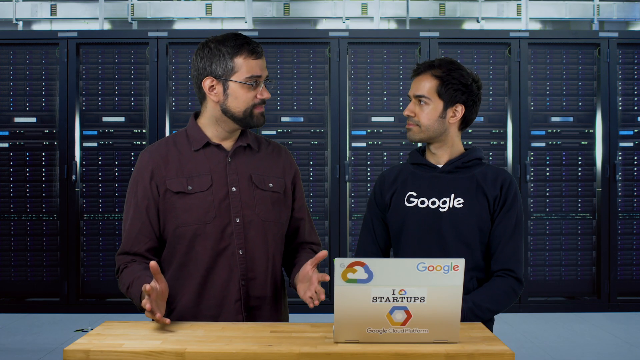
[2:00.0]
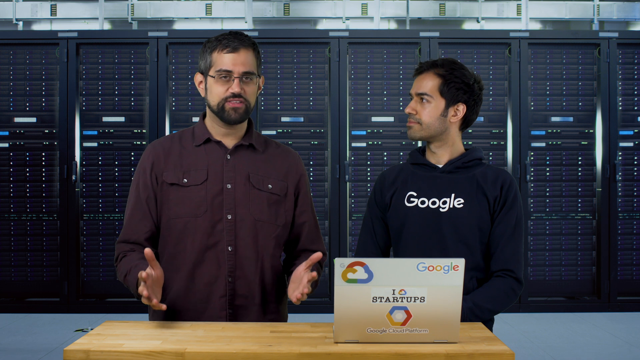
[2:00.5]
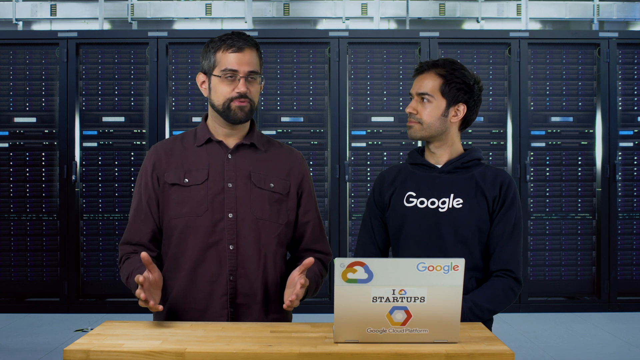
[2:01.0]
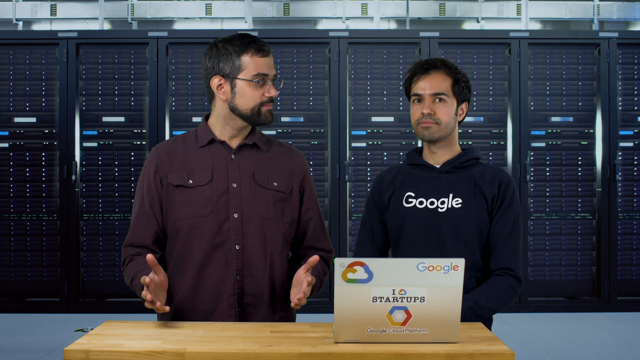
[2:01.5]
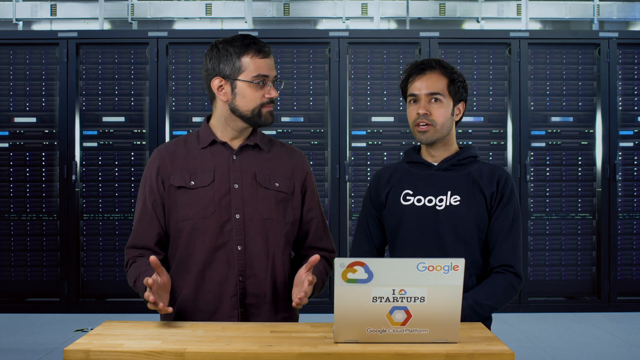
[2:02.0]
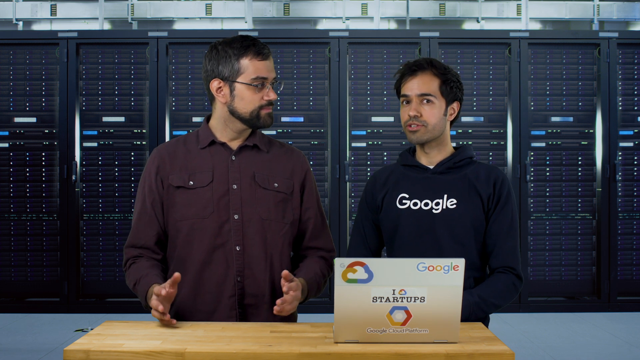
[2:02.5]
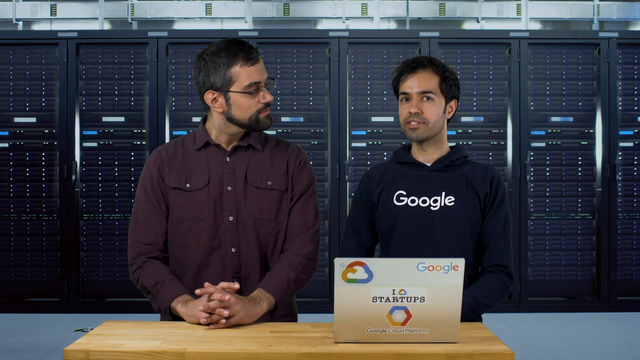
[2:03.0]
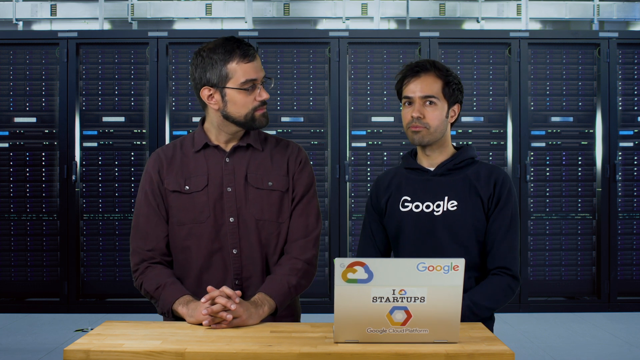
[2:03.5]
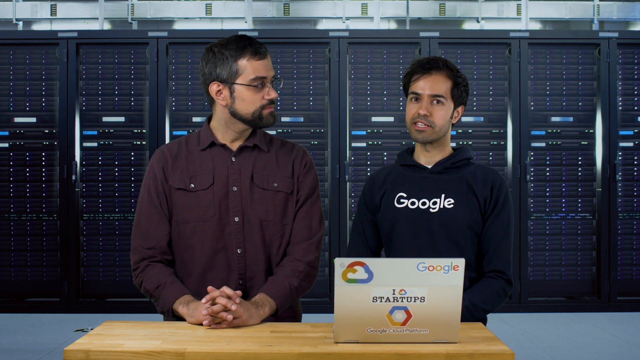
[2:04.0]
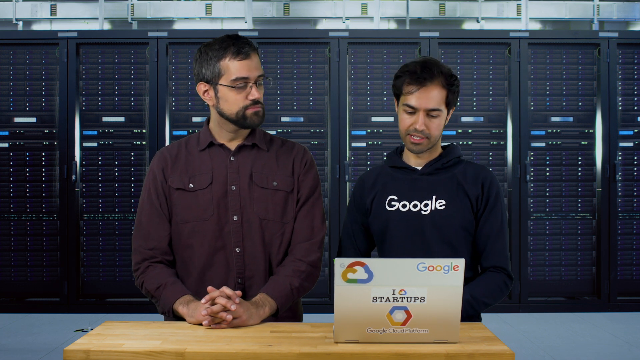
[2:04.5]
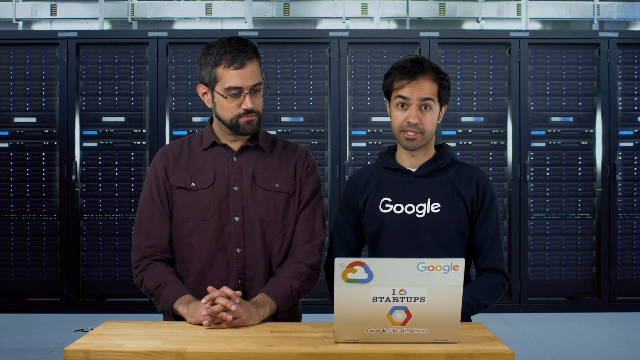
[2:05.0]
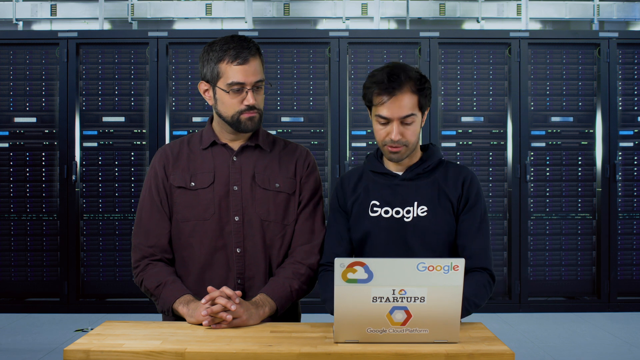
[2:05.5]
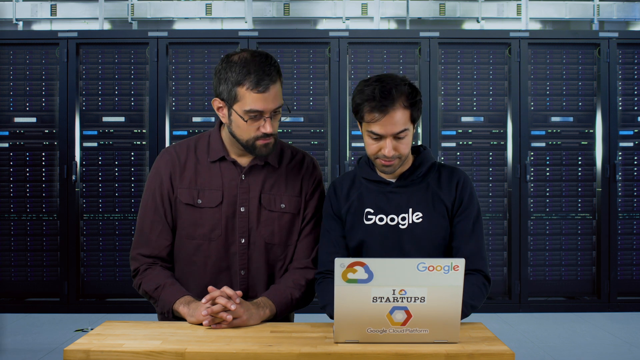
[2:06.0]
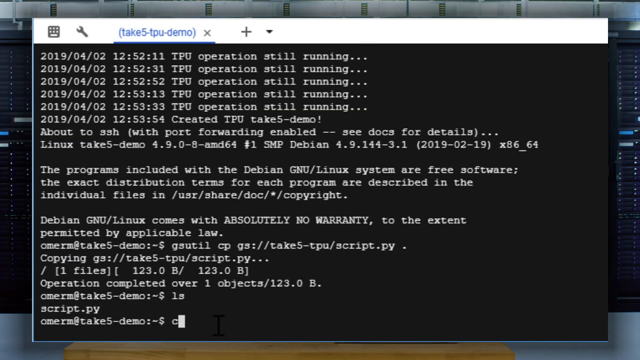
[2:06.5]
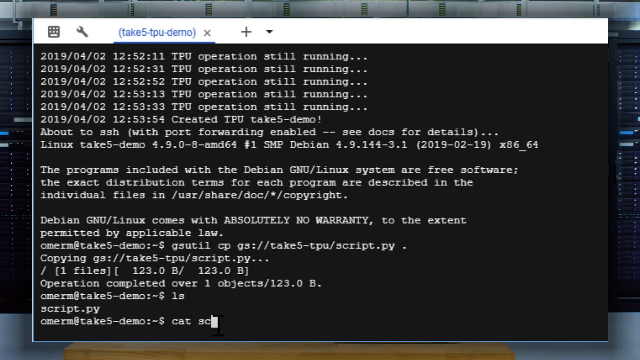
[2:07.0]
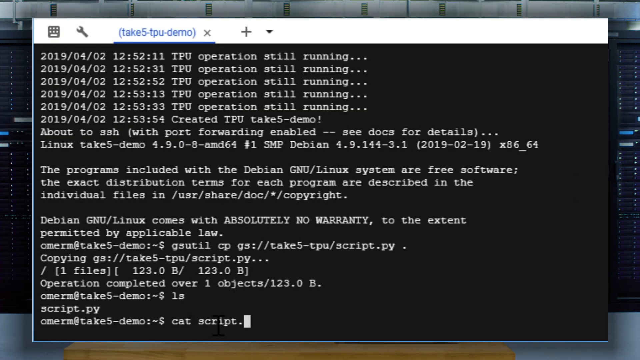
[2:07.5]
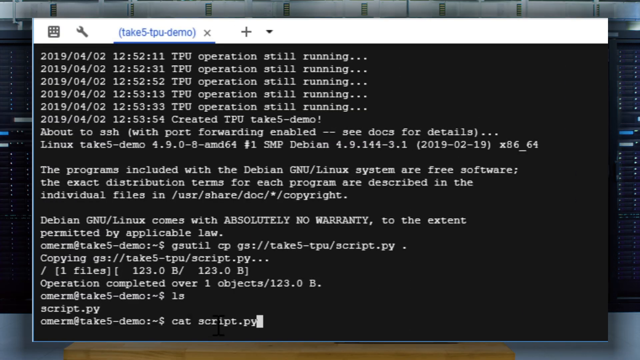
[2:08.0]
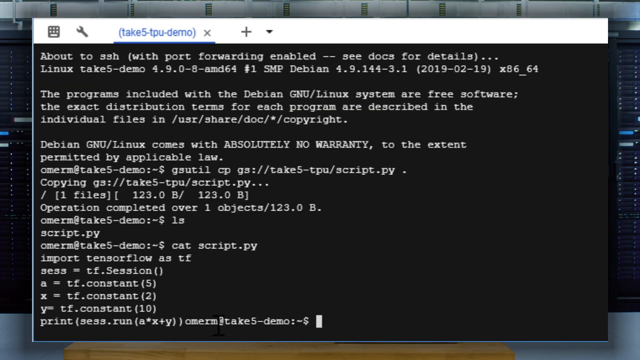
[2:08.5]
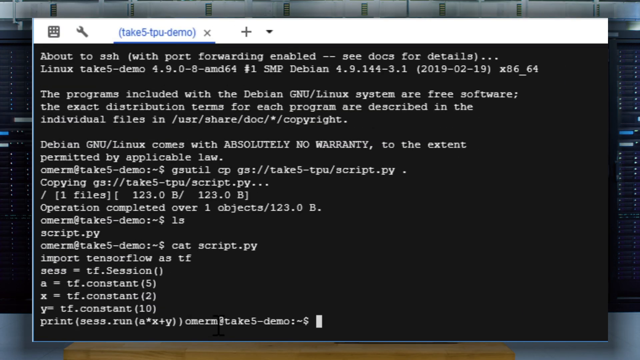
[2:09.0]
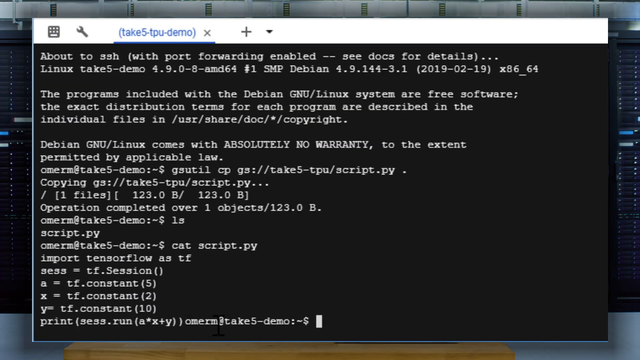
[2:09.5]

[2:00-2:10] Both men are in front of the laptop and seem to have taken a small break to discuss a few things. The one with glasses starts talking with his hands open, then rests them as the other man seemingly talks. They look at the laptop and seem to work on it. The TPU operation is still running, and text in the program begins "the programs included with the" and says they are free software, followed by more information on that. The user seems to be inputting more data to move the demo along.